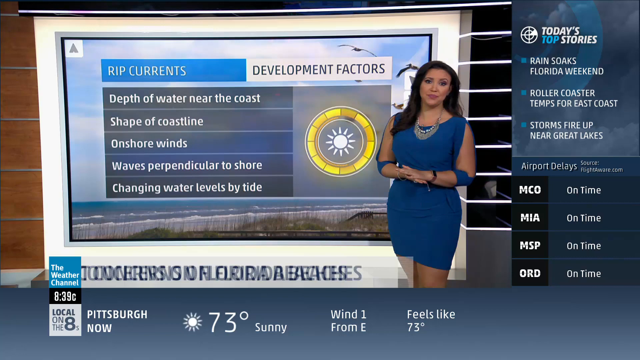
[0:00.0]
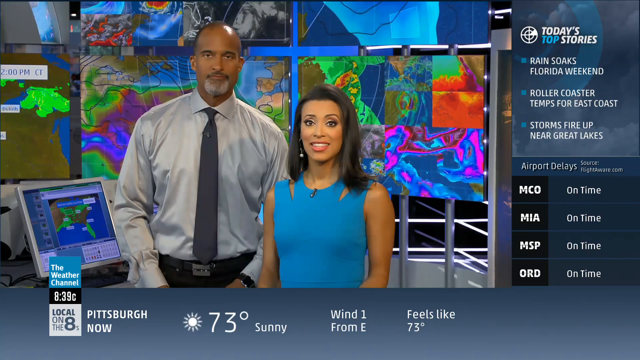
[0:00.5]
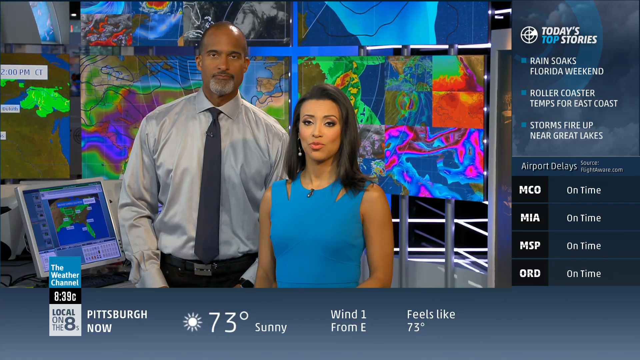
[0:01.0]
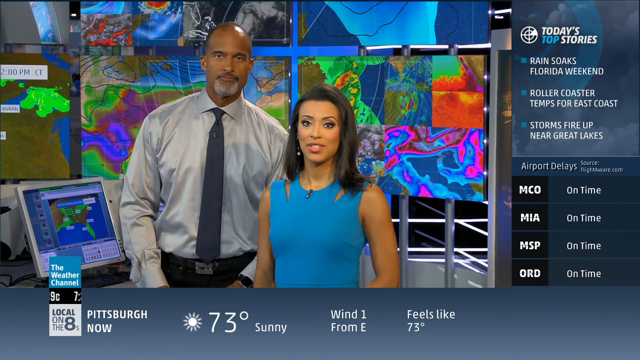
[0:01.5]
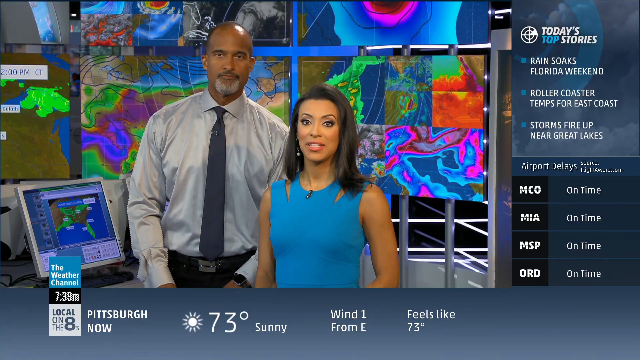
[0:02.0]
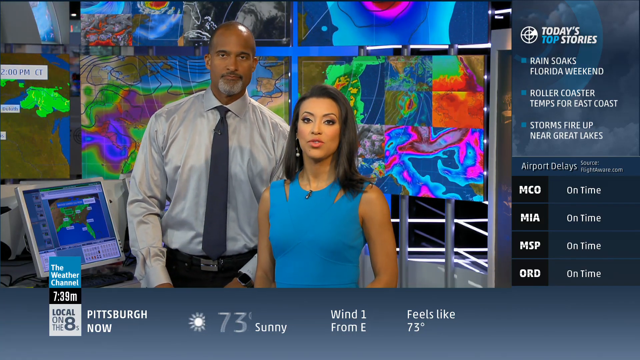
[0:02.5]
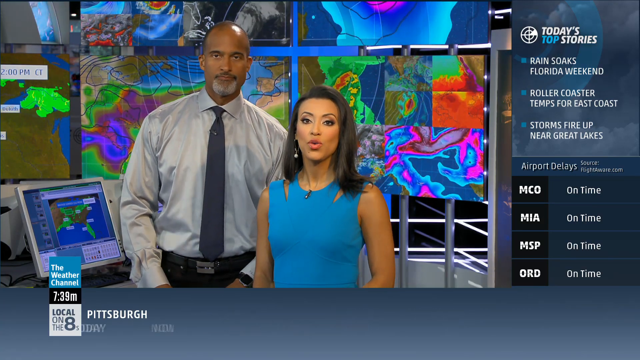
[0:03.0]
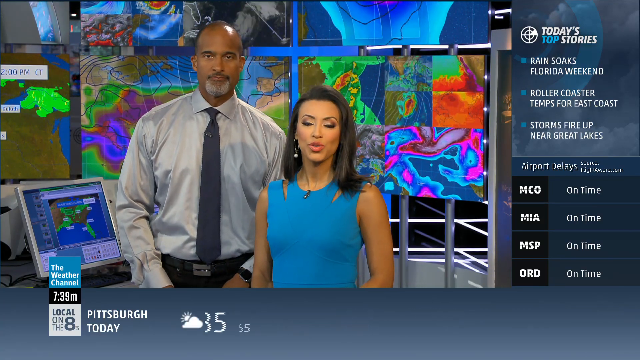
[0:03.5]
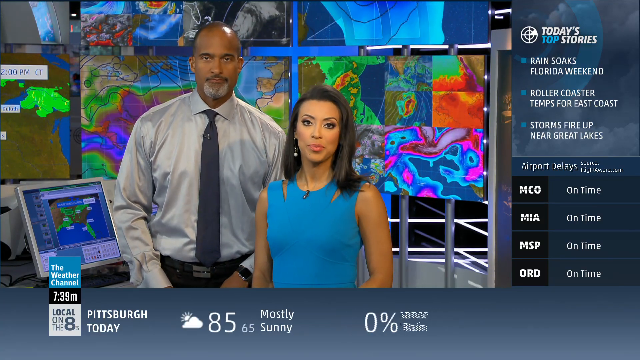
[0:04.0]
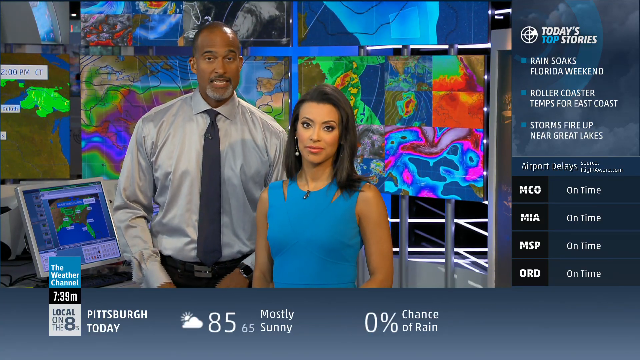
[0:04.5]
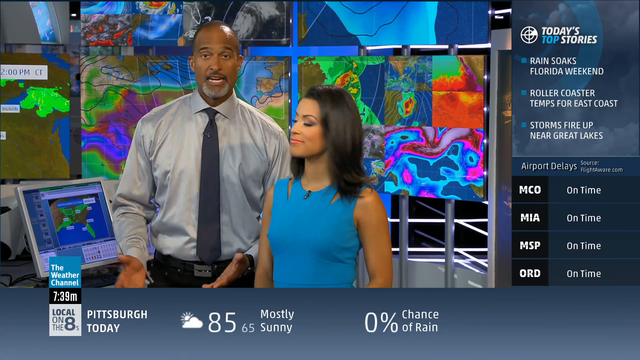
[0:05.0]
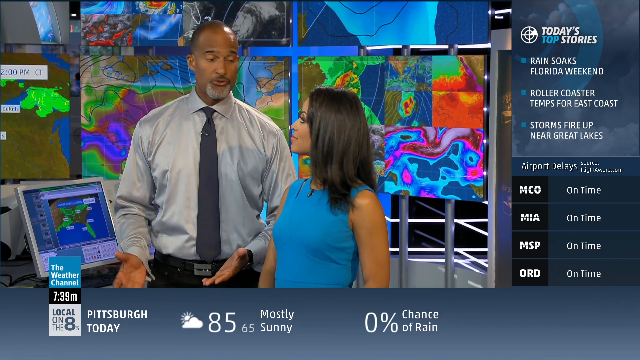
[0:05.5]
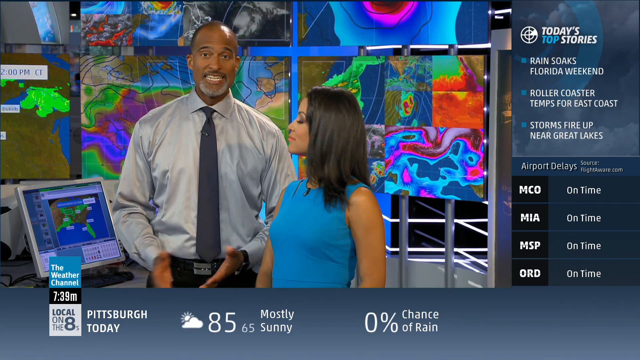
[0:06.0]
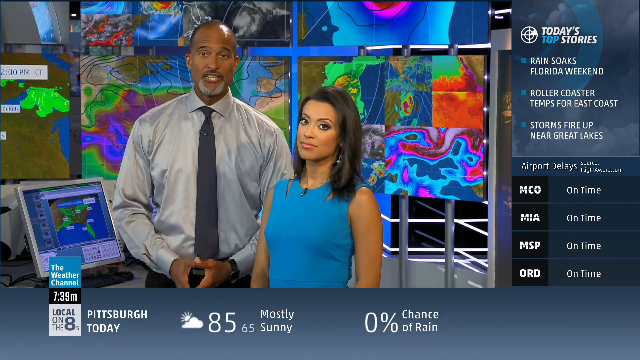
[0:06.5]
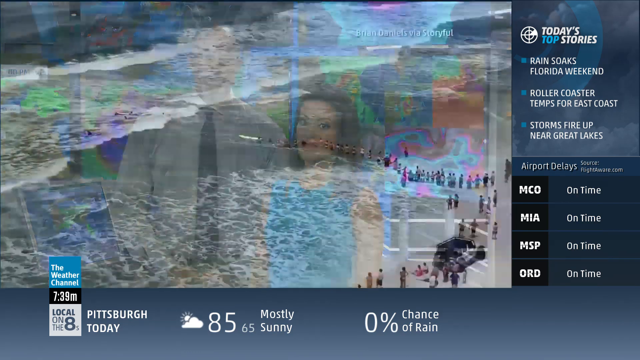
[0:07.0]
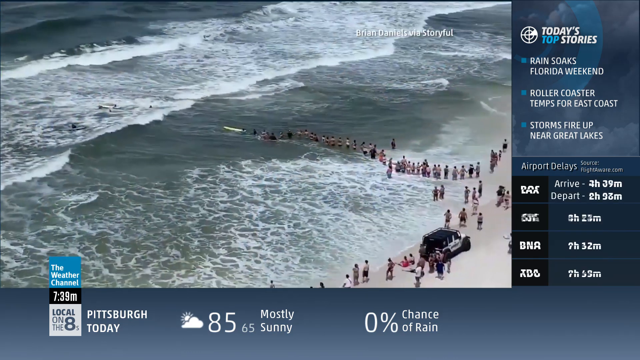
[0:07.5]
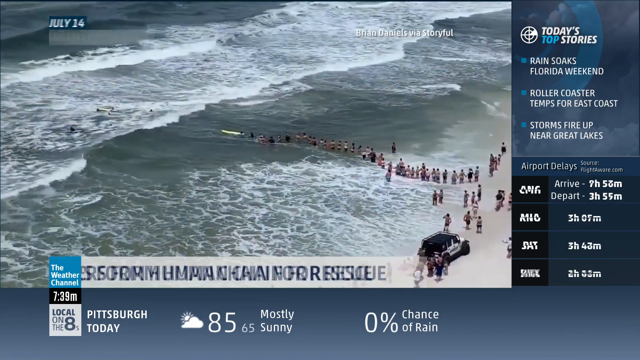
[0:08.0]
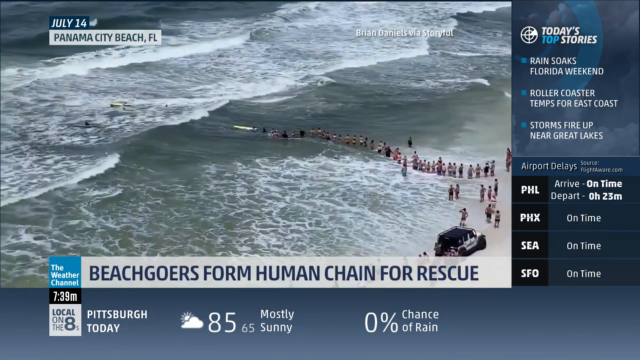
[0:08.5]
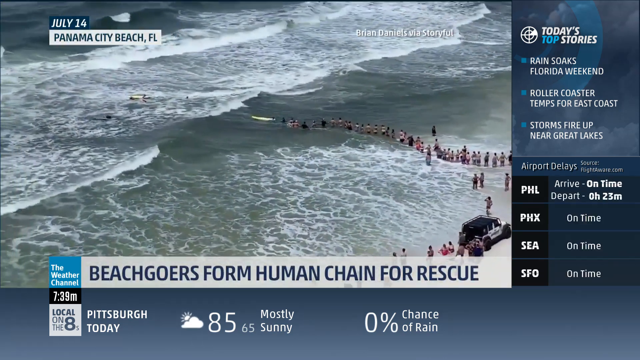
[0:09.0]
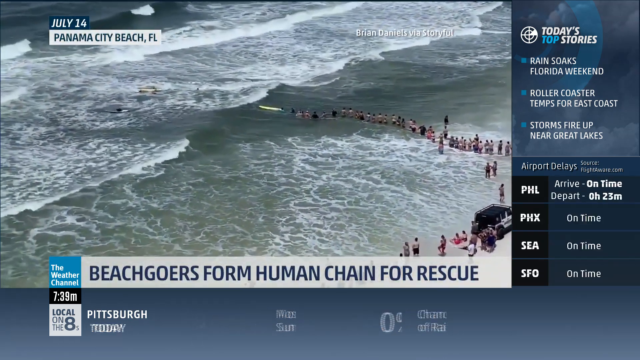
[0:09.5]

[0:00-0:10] A woman meteorologist in a blue dress and a necklace stands in front of a screen displaying the development factors of rip currents: depth of water near the coast, shape of coastline, onshore winds, waves perpendicular to shore, and changing water levels by tide. In the upper corner the text reads "today's top stories" with the headlines "Rain soaks Florida weekend," "roller coaster temps for east coast," and "storms fire up near Great Lakes." The next scene shows two newscasters with a radar behind them, talking to the camera. At the bottom a weather forecast reads high of 85, low of 65, mostly sunny, 0% chance of rain. The segment is the Weather Channel's Local on the 8, with a forecast local to Florida.